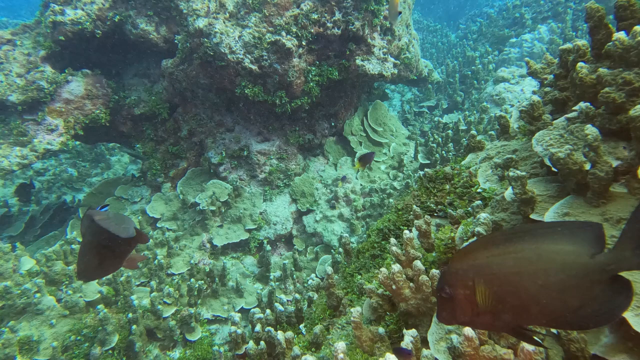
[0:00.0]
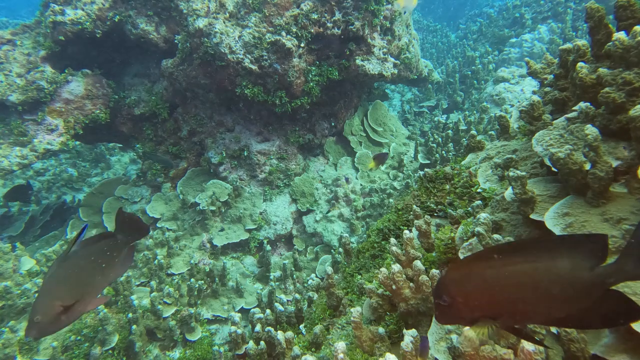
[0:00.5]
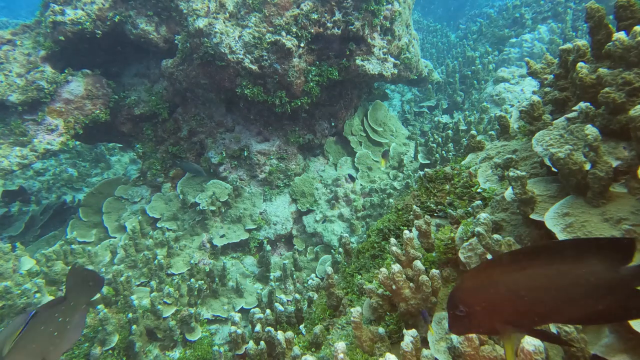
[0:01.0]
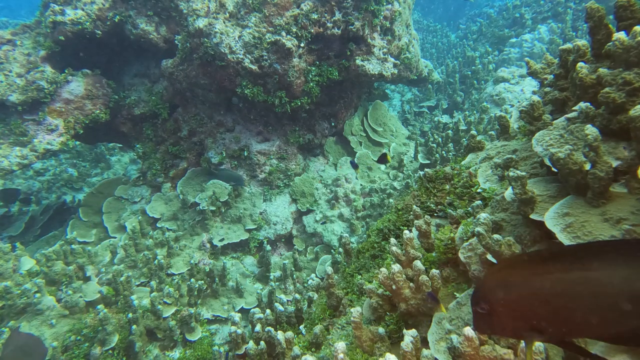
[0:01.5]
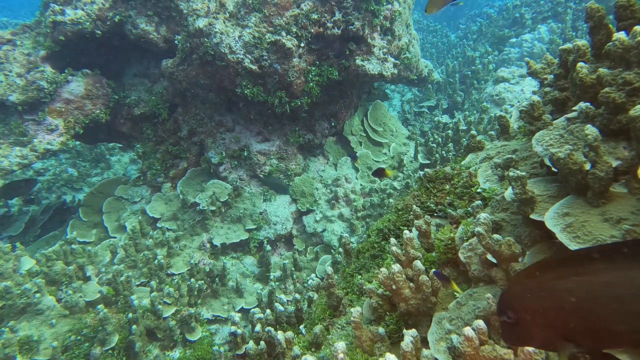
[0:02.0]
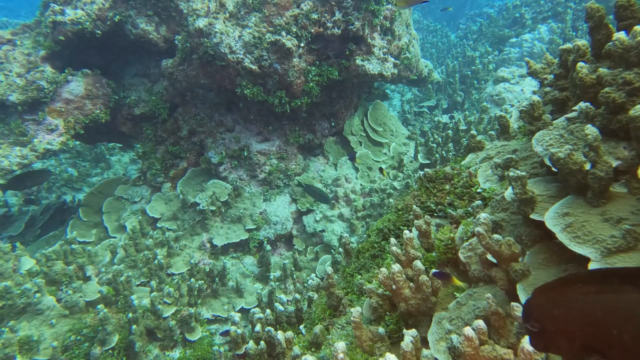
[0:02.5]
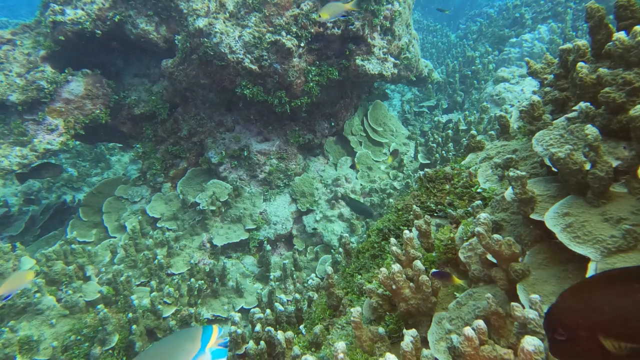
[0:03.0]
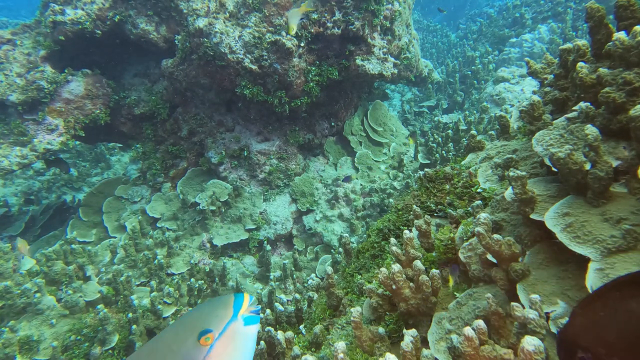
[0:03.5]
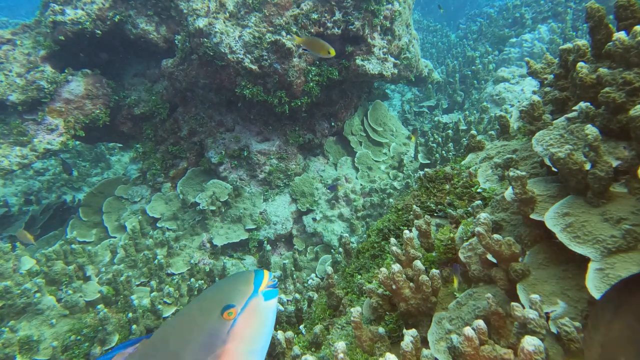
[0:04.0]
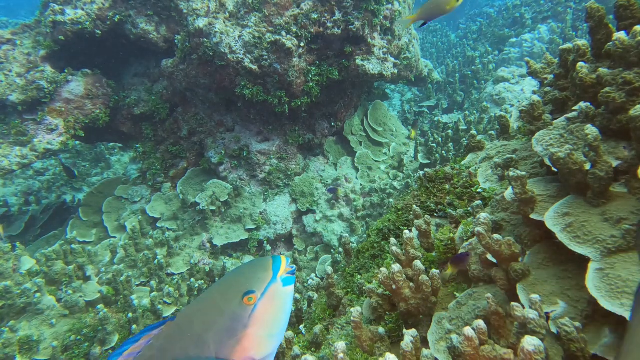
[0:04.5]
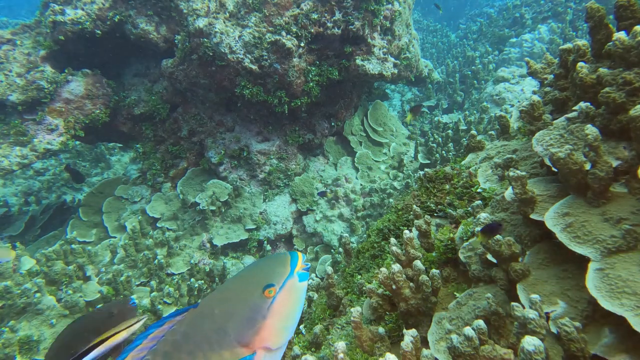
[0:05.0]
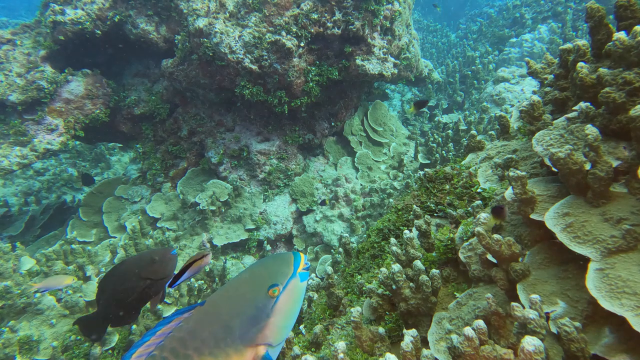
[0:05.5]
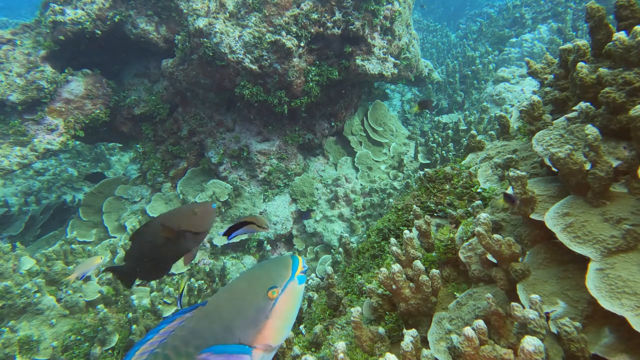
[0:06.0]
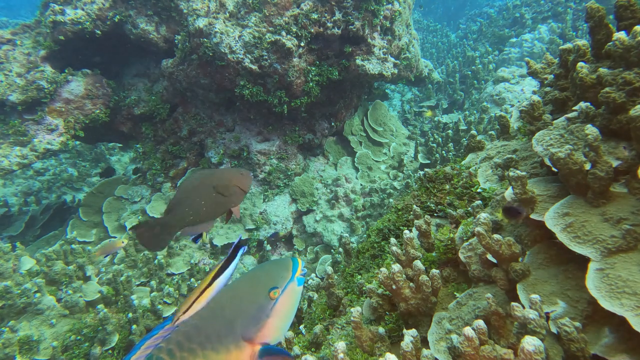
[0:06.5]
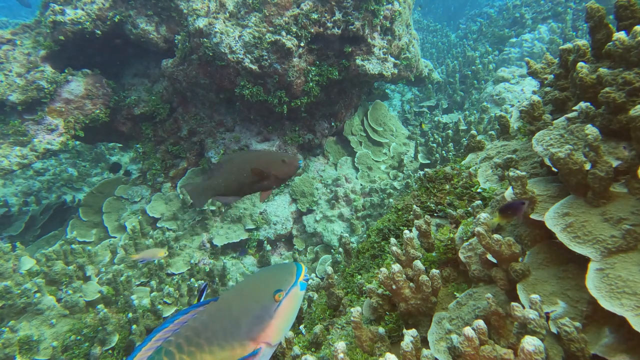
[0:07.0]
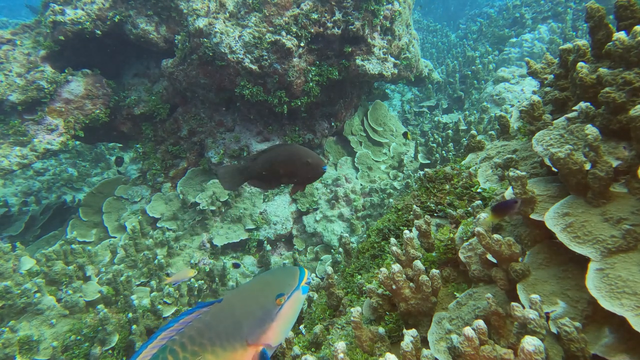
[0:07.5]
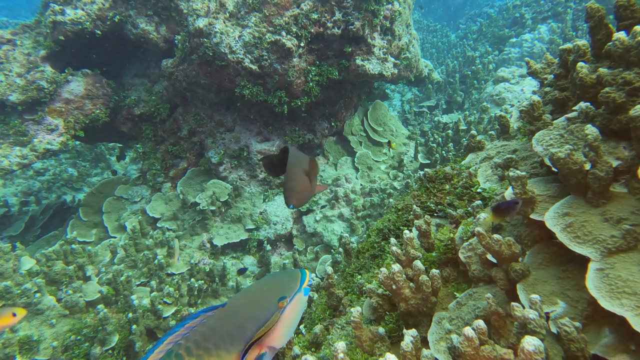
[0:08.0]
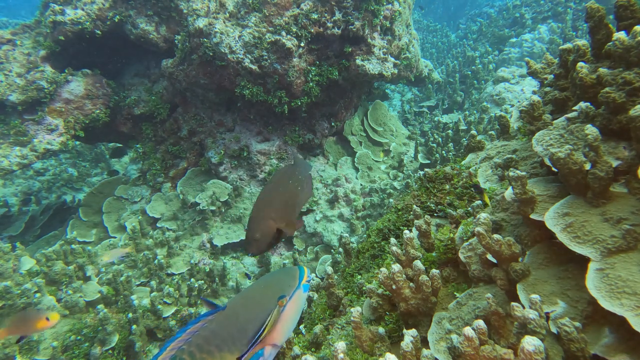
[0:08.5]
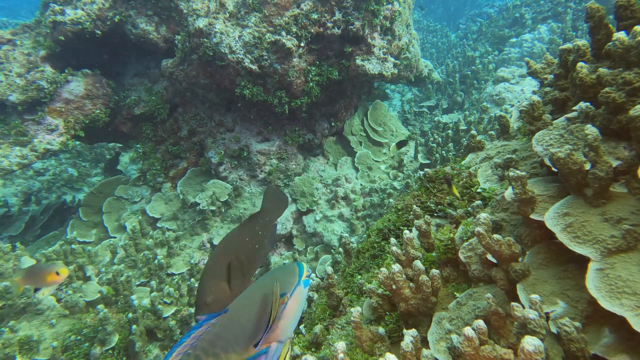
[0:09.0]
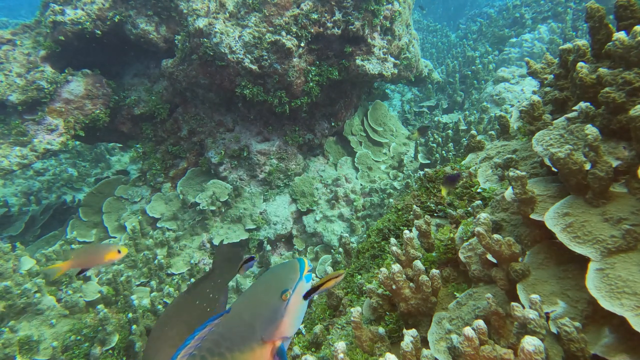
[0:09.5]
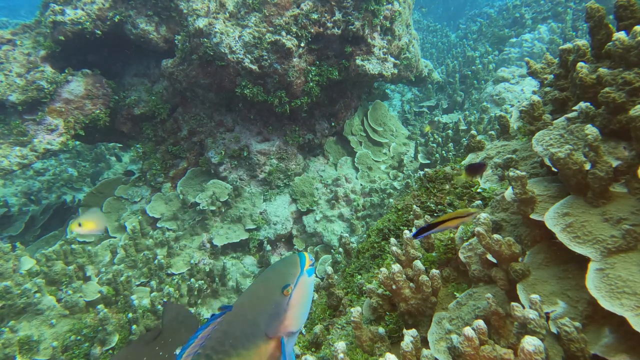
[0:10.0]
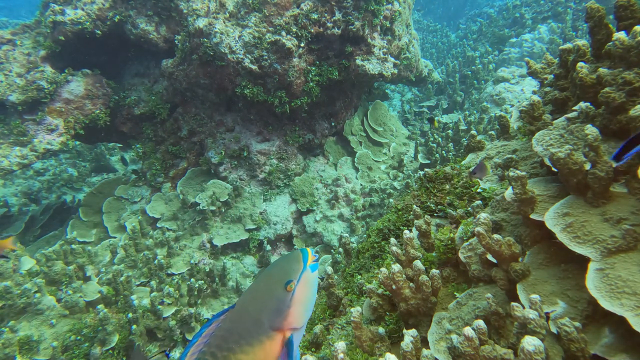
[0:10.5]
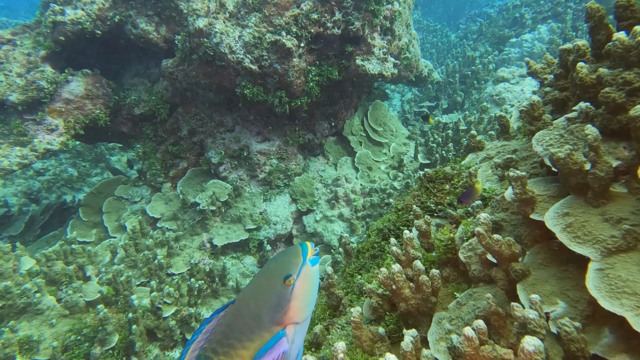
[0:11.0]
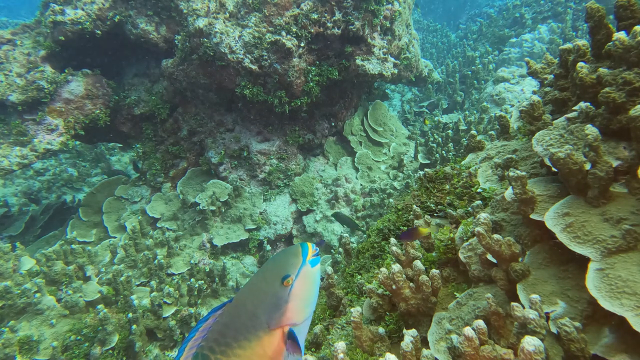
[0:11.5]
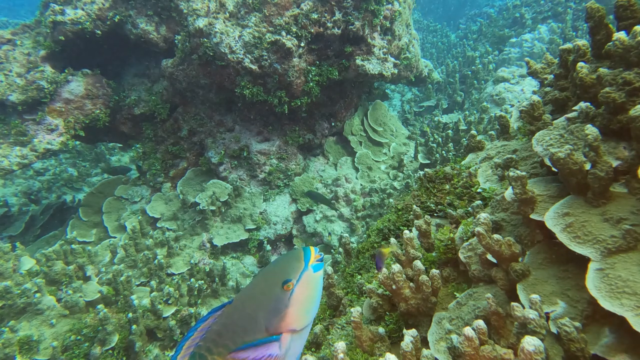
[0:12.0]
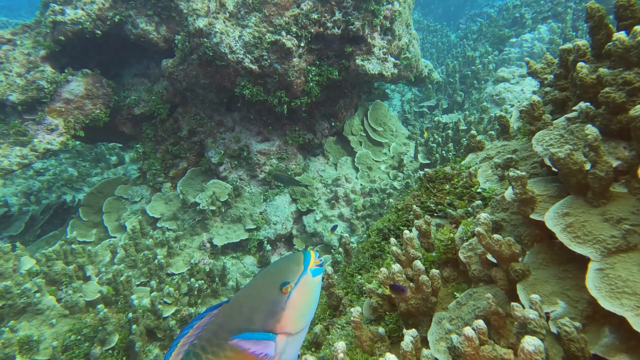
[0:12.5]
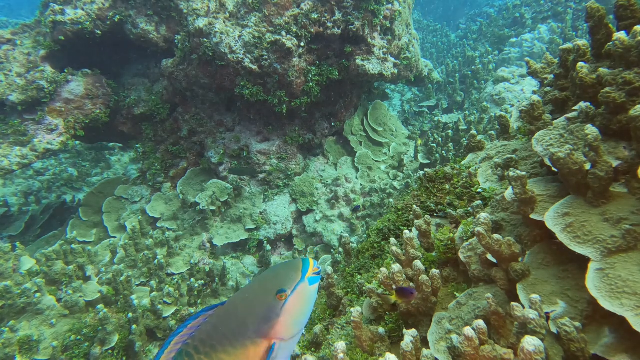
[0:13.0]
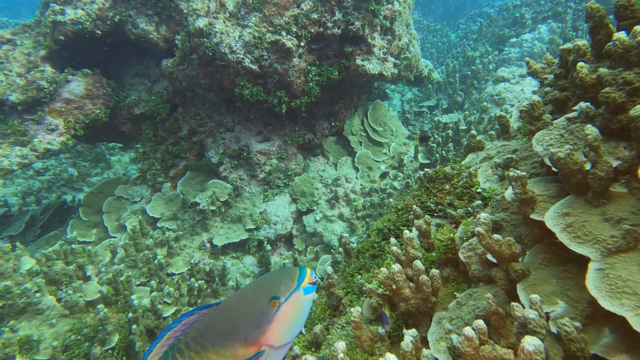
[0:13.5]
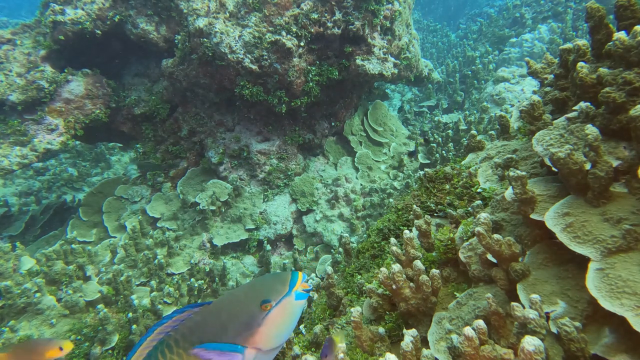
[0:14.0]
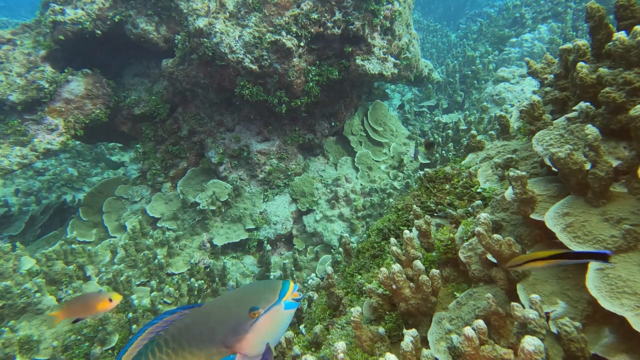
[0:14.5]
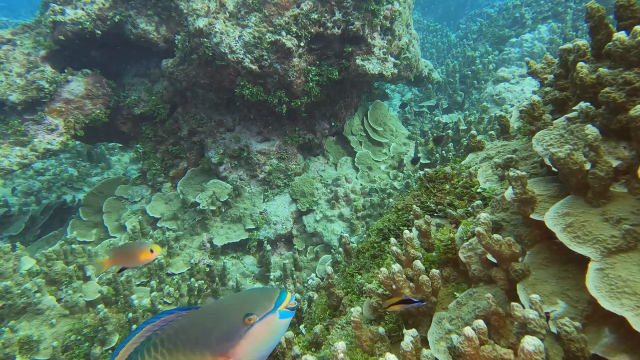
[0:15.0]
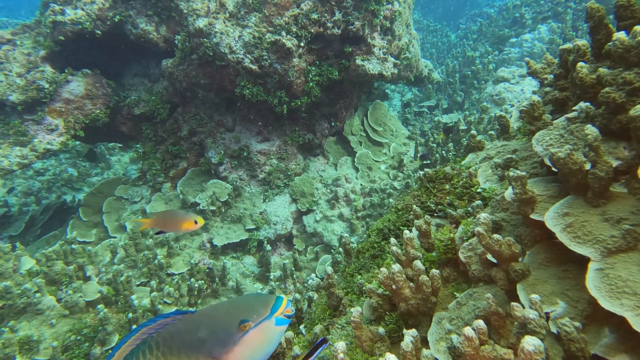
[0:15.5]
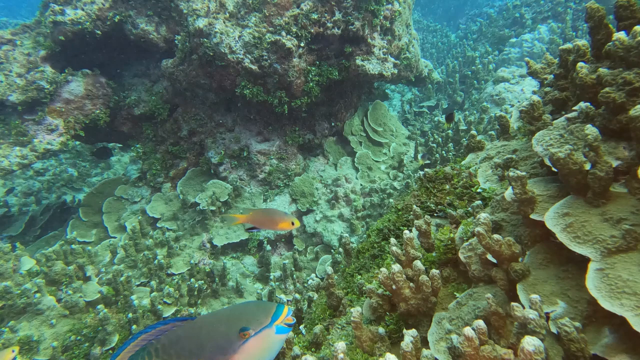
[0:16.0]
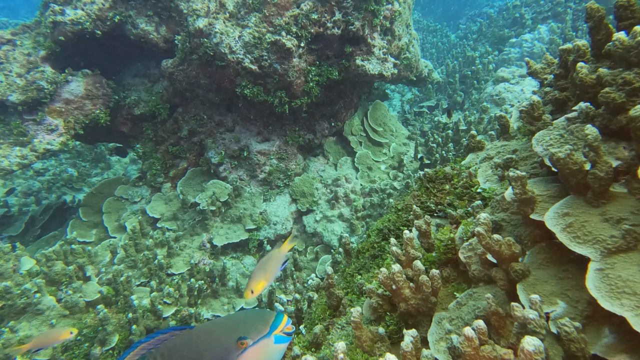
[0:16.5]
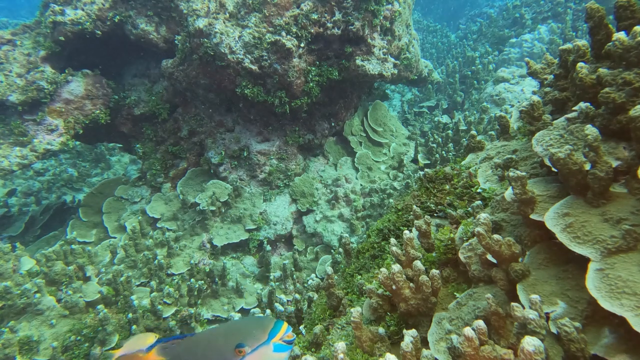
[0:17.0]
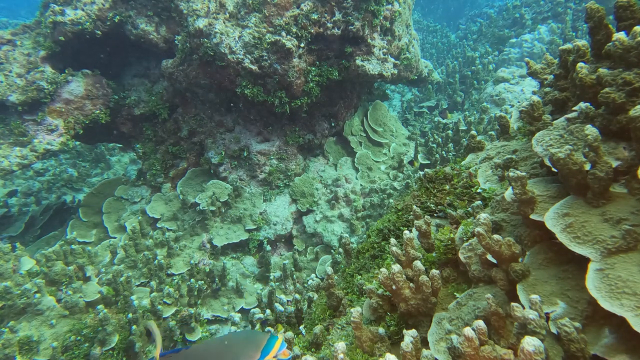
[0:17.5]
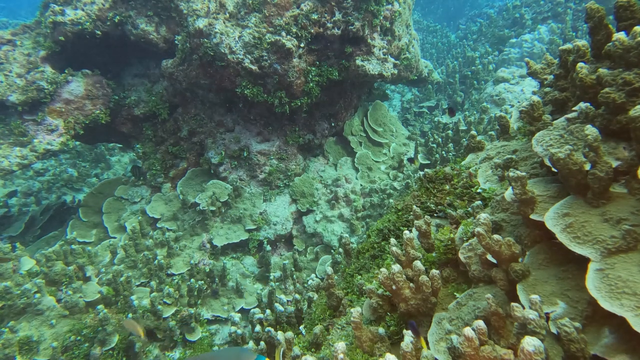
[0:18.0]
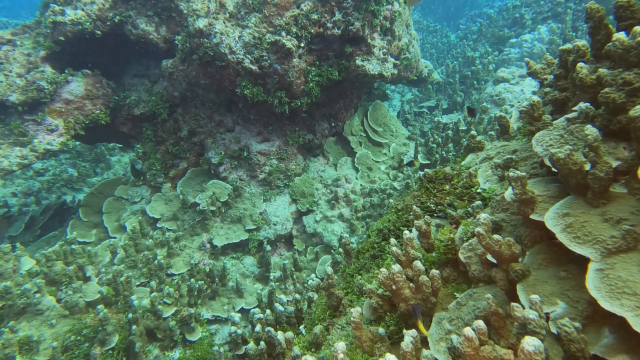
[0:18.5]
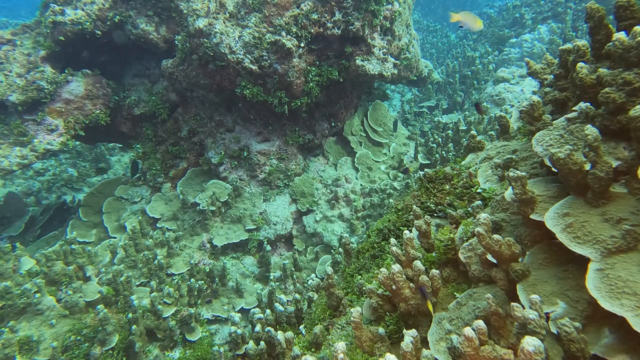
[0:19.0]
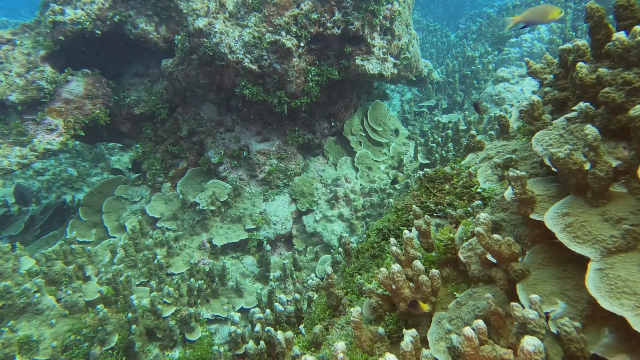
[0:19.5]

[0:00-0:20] A static shot shows an underwater scene that appears to be a reef, with different types of coral visible. The water appears quite clear, and the corals and fish are clearly visible. A number of different types of reef fish swim in and out of the frame: some are darkly colored and some lightly colored, and some are quite small, others medium-sized, and others larger. There are several different types of coral, including some flat coral as well as what appear to be finger coral.